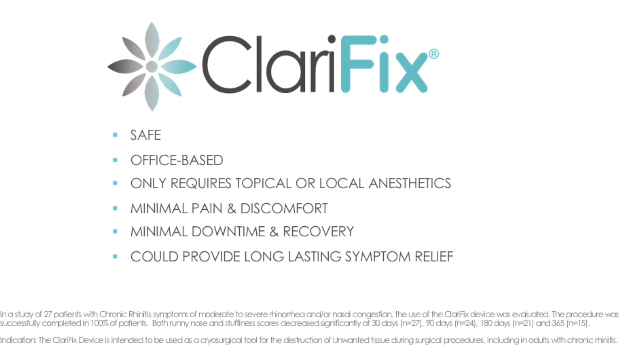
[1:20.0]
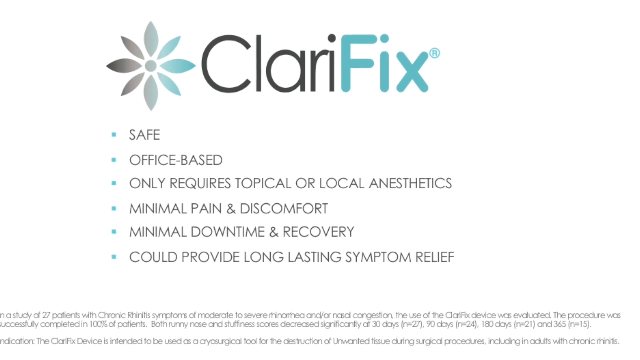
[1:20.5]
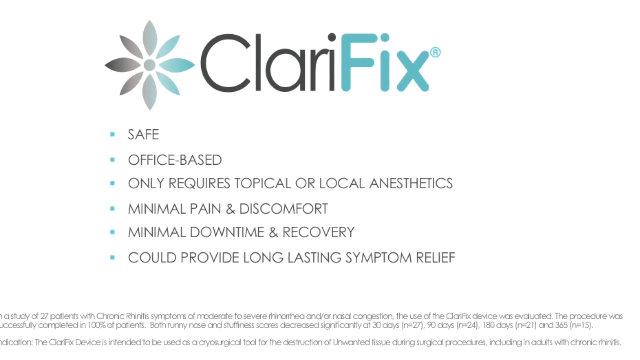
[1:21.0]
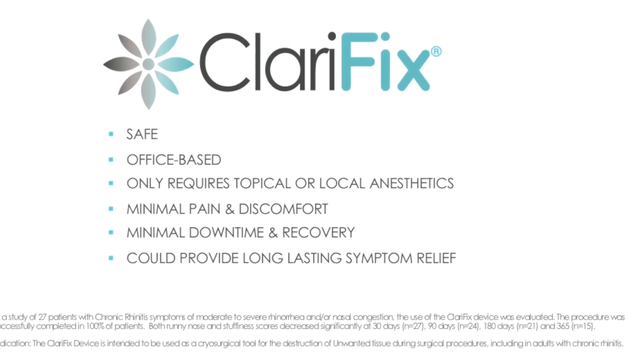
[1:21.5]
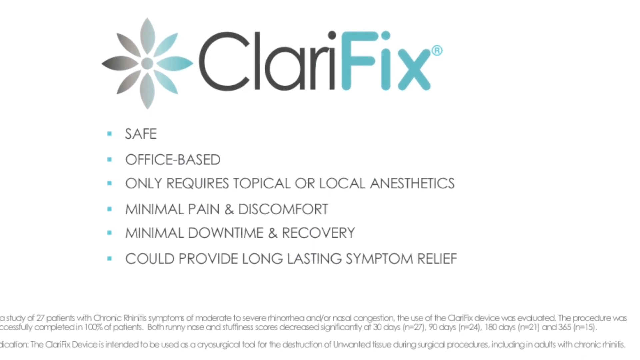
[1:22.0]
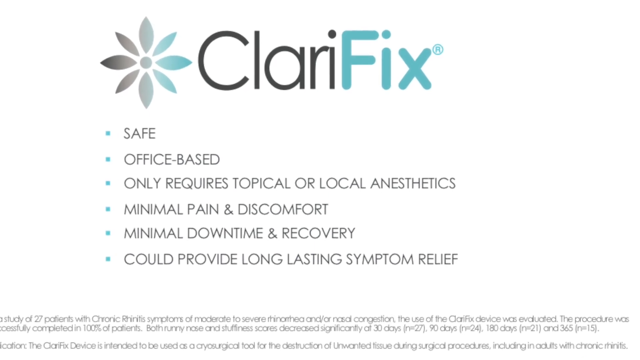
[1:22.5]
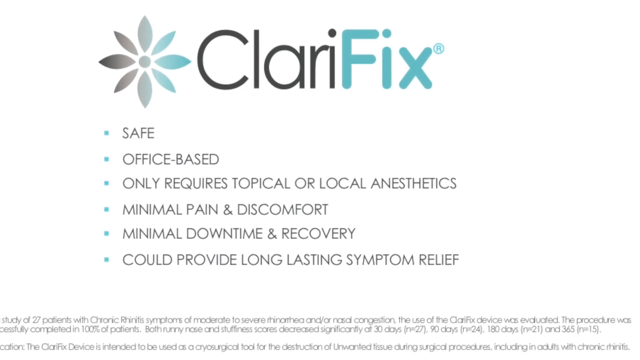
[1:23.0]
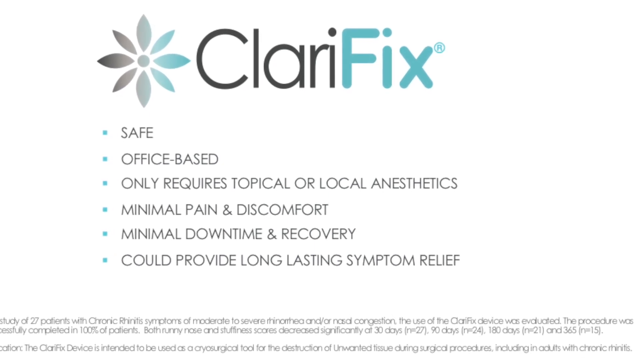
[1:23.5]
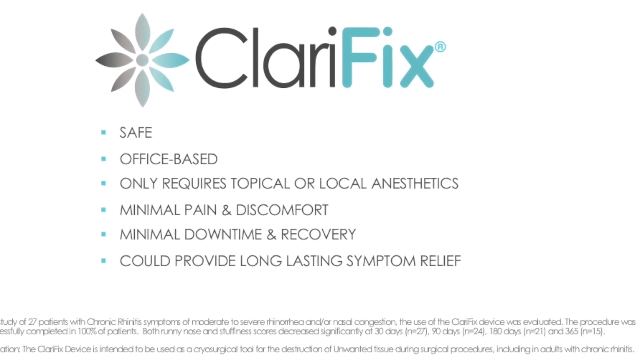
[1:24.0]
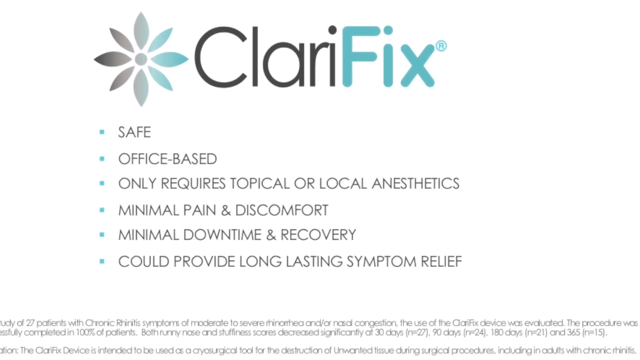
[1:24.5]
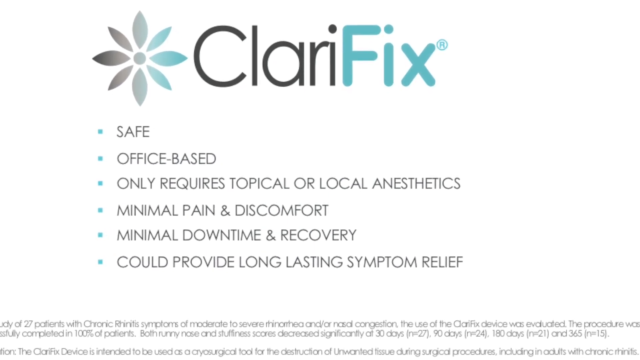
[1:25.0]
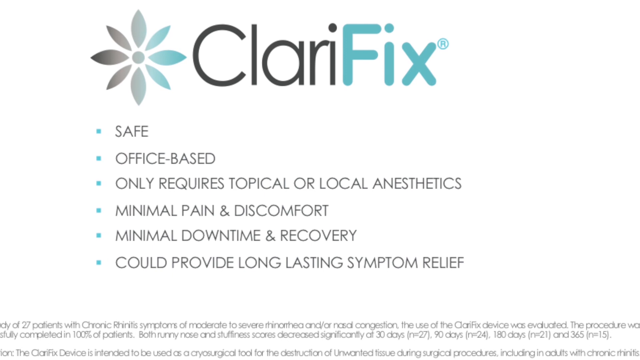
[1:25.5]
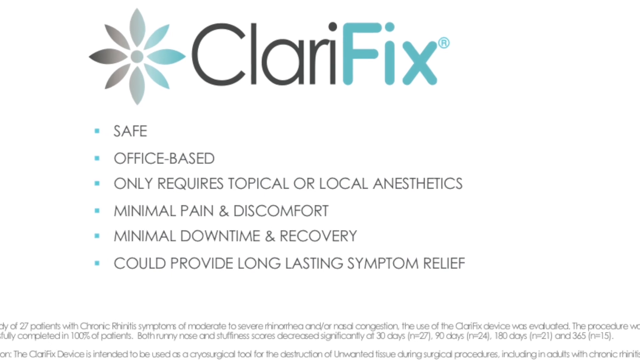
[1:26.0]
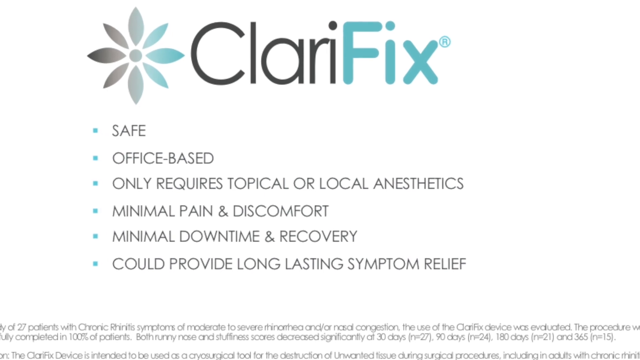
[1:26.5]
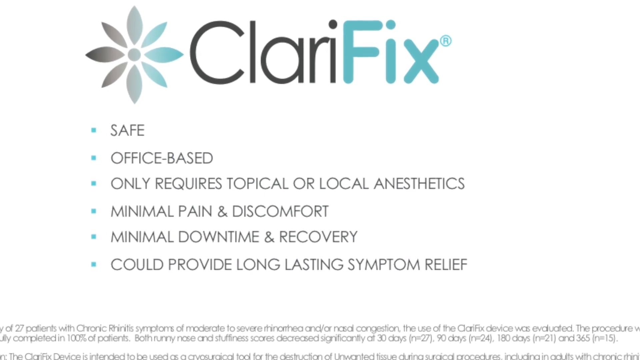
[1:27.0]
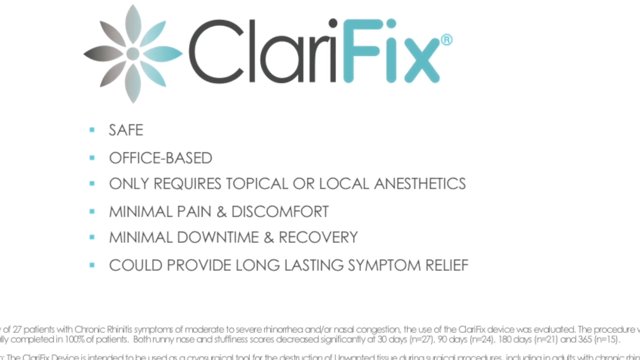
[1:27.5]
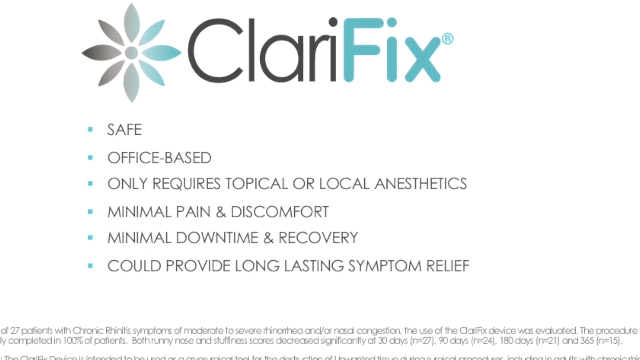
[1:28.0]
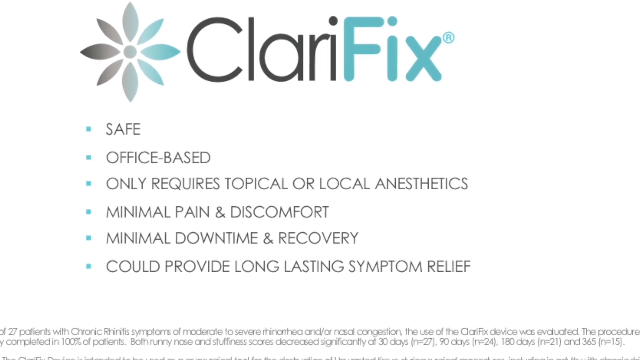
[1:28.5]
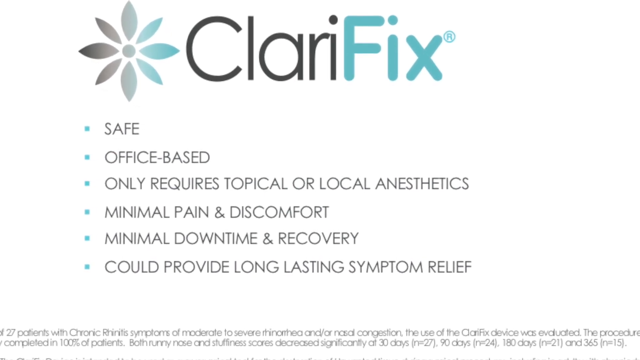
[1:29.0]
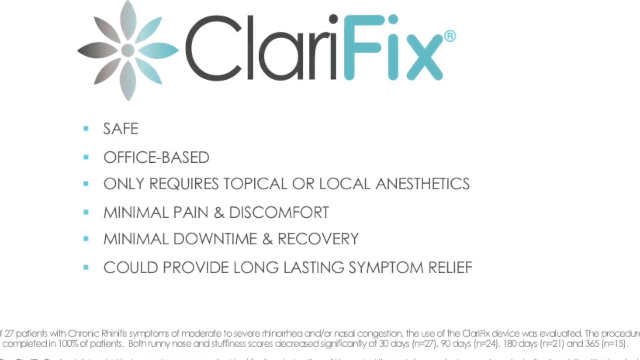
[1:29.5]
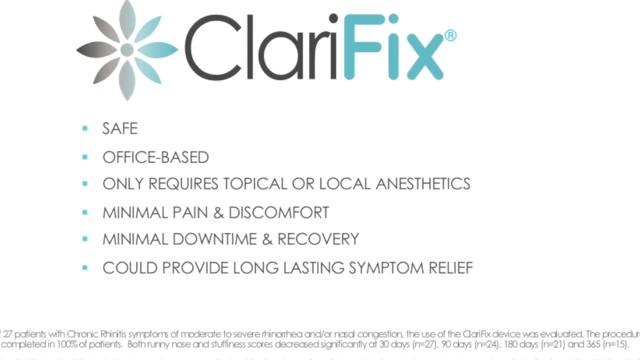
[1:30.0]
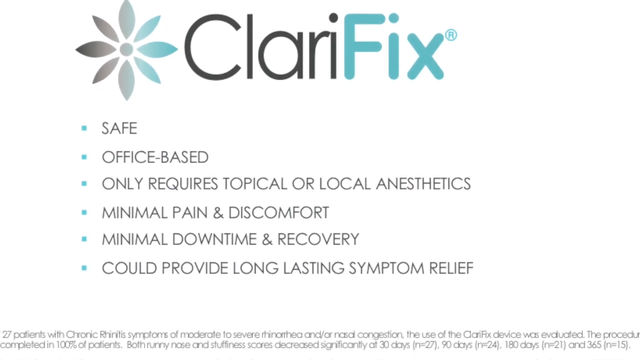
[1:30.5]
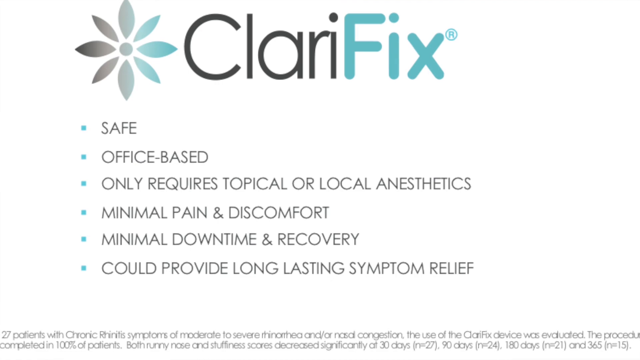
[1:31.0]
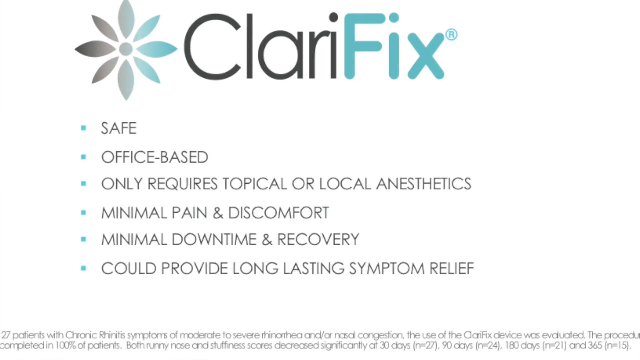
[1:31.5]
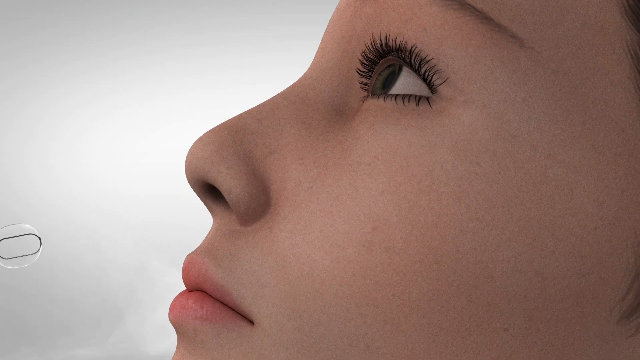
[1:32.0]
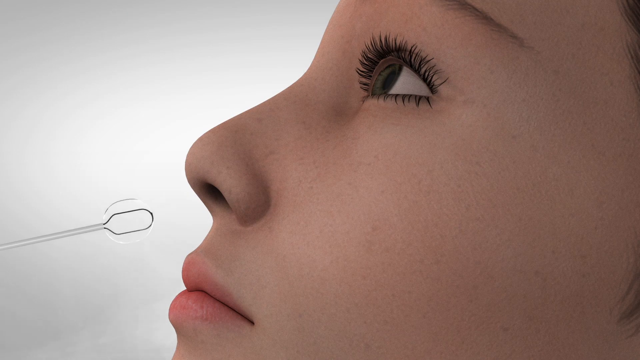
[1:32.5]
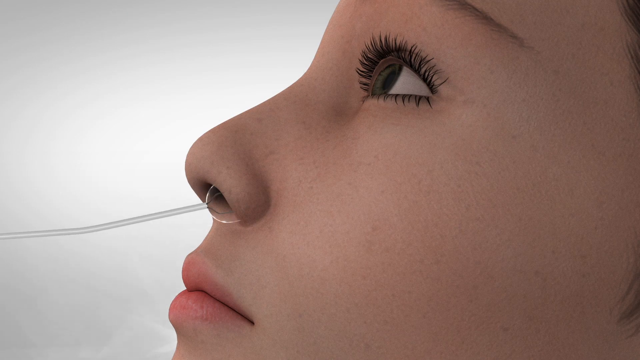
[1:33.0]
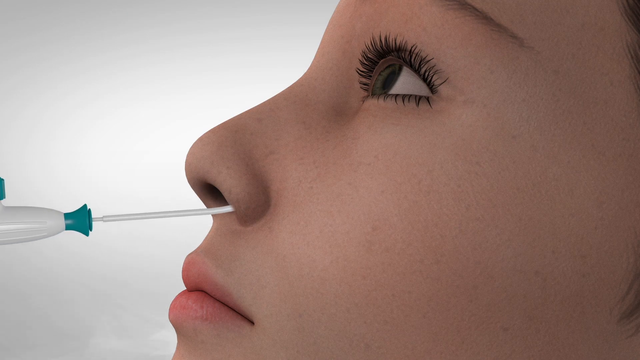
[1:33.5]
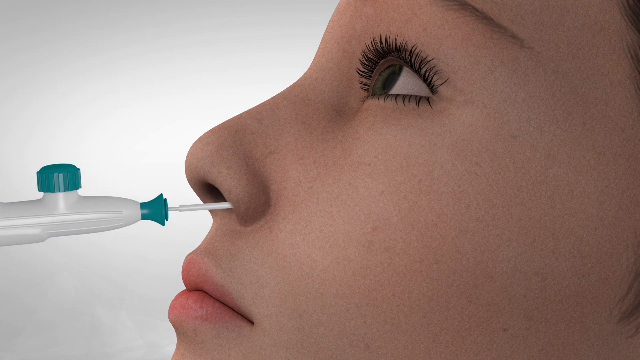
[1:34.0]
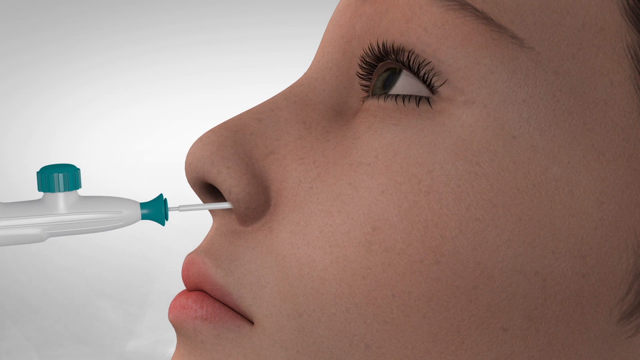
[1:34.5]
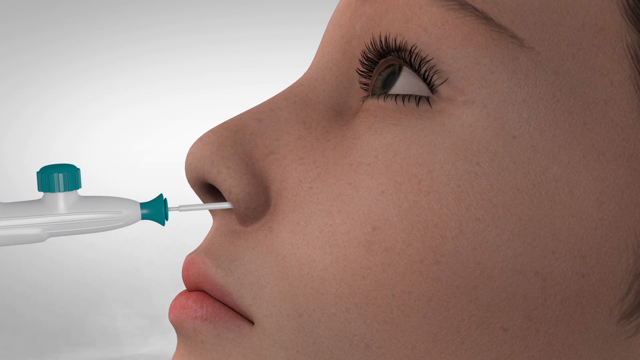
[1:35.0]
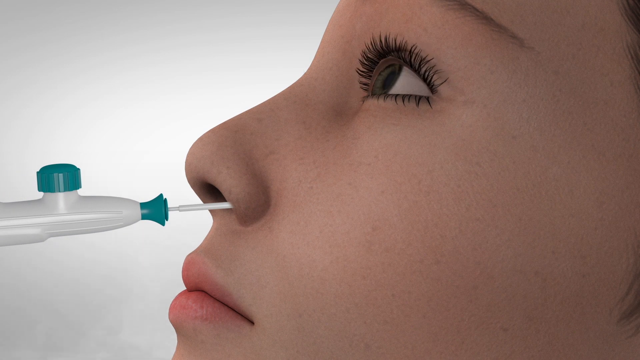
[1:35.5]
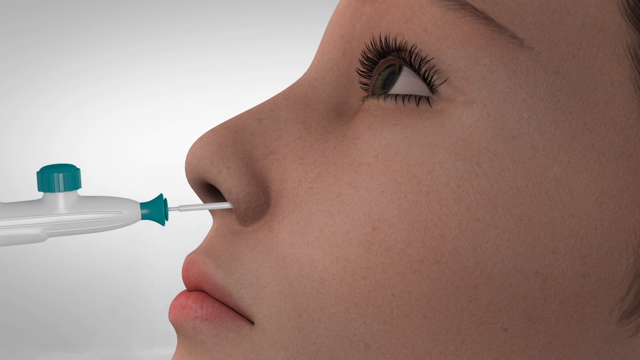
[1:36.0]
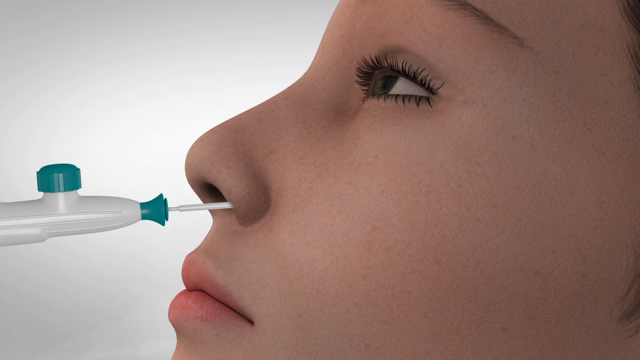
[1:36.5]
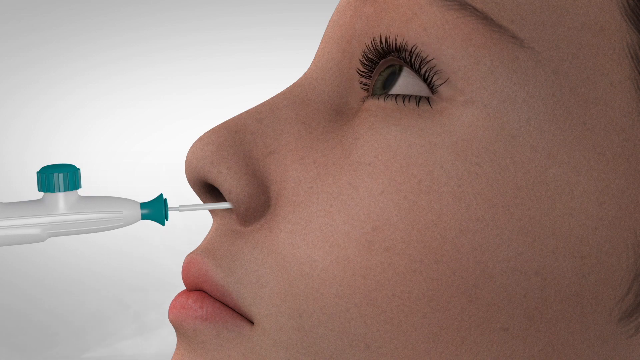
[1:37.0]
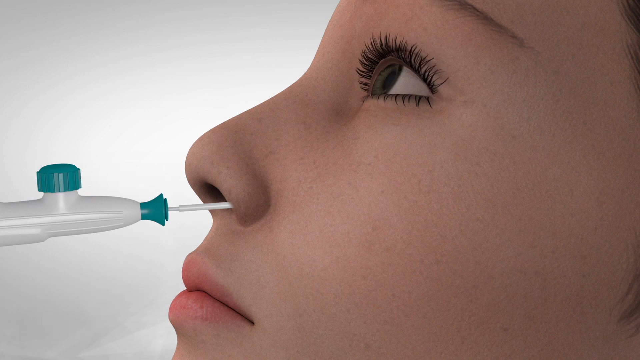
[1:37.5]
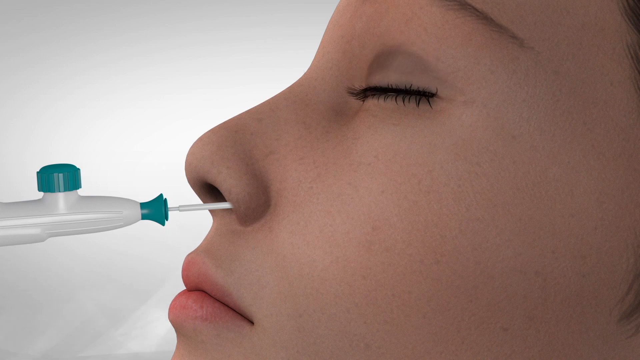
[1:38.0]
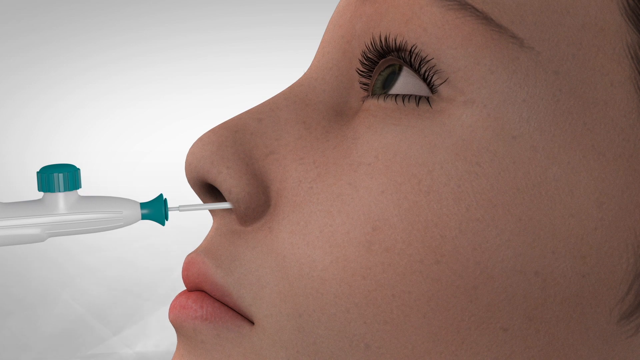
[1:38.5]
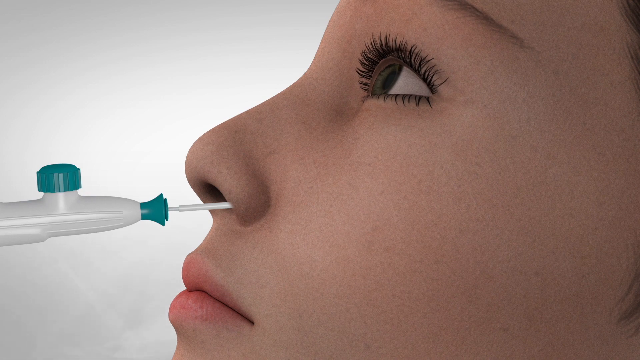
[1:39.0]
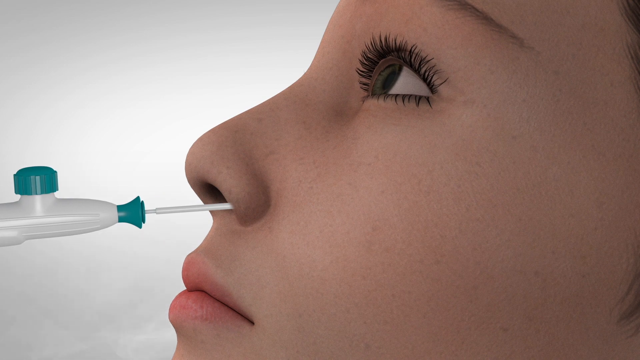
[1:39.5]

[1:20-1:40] On a white background is a flower that is part of a logo, in a gradient from gray on the left to light blue on the right. Black text reads "Clari" and blue text reads "fix." Below, beside blue bullets, black text includes "safe," "only requires topical or local anesthetics," "discomfort," "downtime and recovery" and "could provide long lasting symptom relief." The view kind of zooms in on this image until it becomes bigger. Then a CGI woman appears, with only part of her face visible: light skin, dark eyes and part of a dark brow at the top. She tilts her head back as a long, thin, clear, flexible device goes up her nose. It is attached to some kind of medical device like a gun, with teal or dark green at the tip and a teal cap on top, which almost looks like a kazoo. She blinks multiple times, the device pulls out, and she continues to blink.